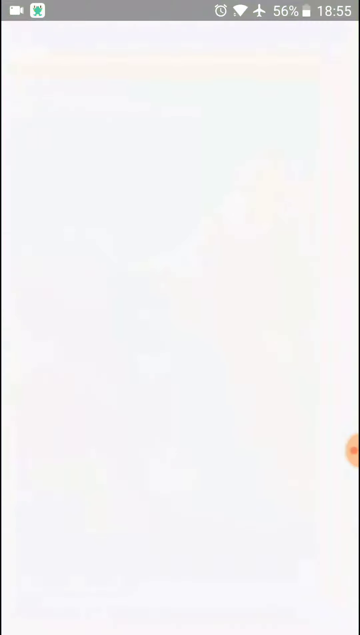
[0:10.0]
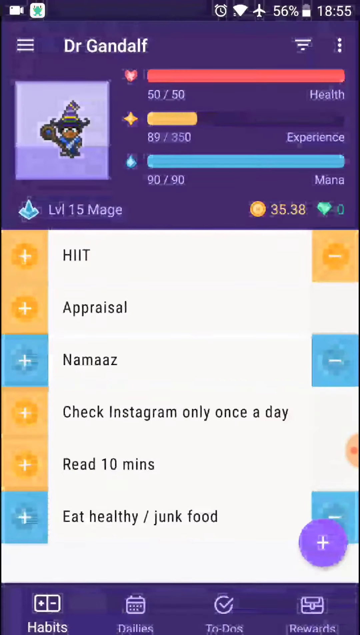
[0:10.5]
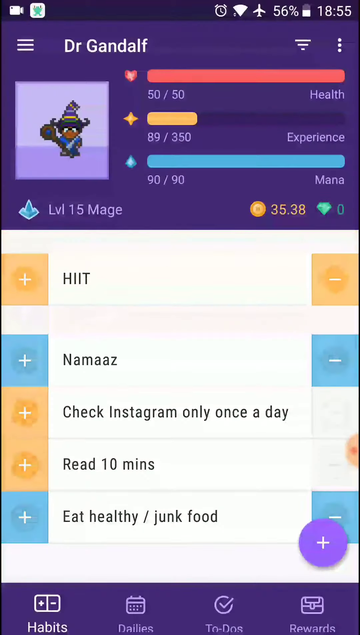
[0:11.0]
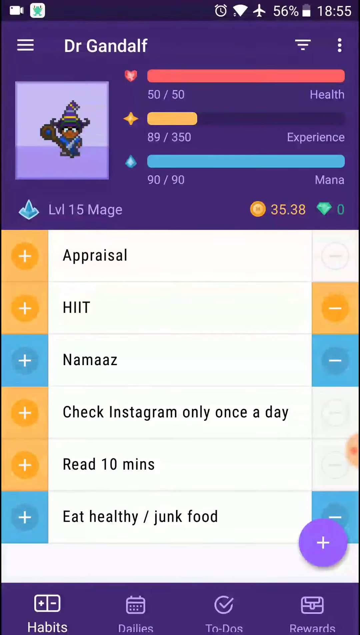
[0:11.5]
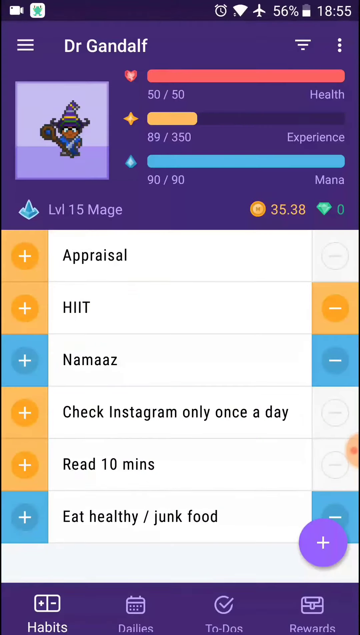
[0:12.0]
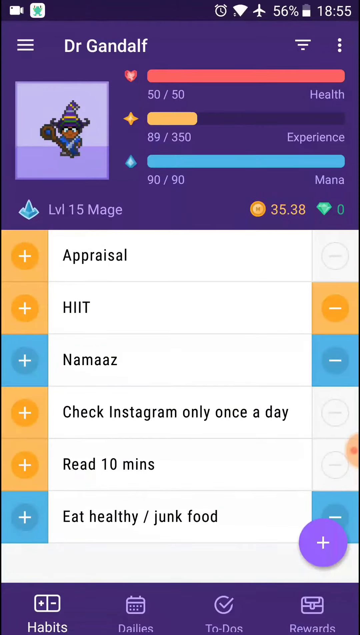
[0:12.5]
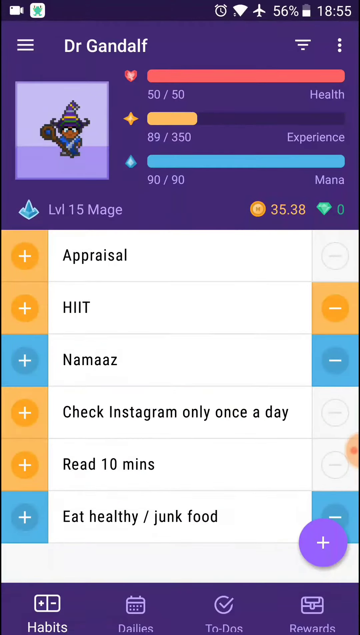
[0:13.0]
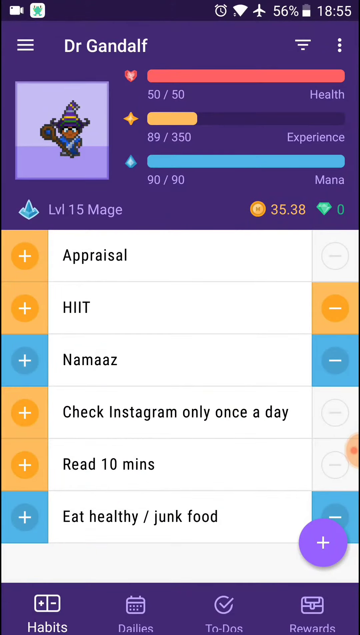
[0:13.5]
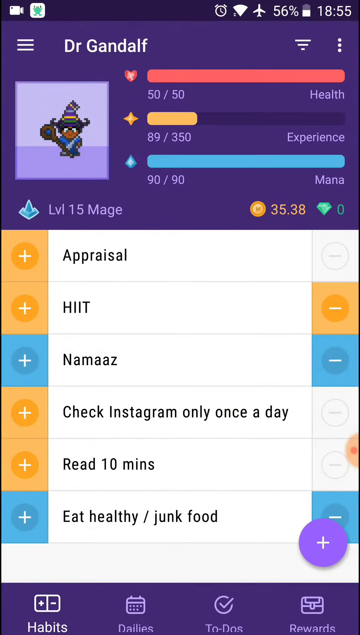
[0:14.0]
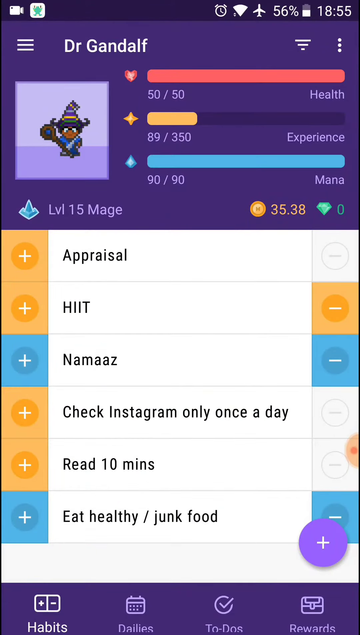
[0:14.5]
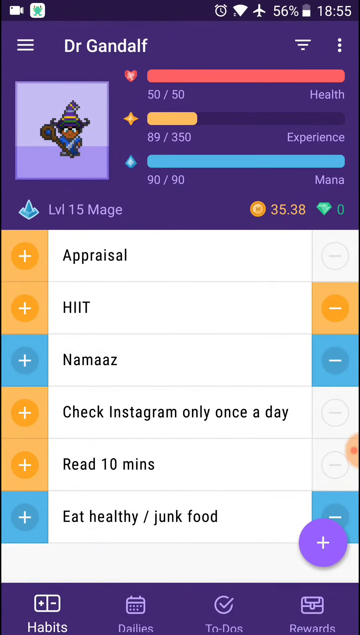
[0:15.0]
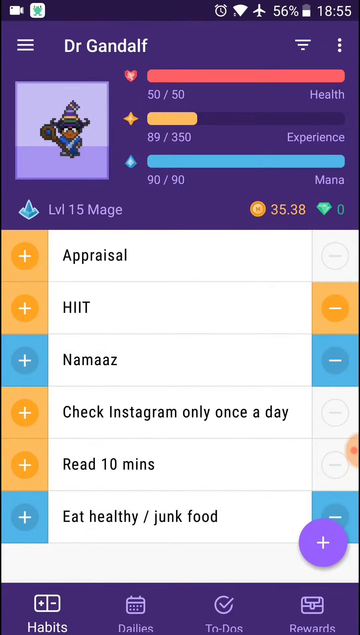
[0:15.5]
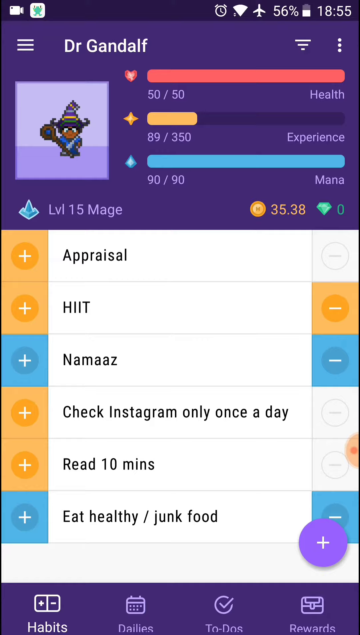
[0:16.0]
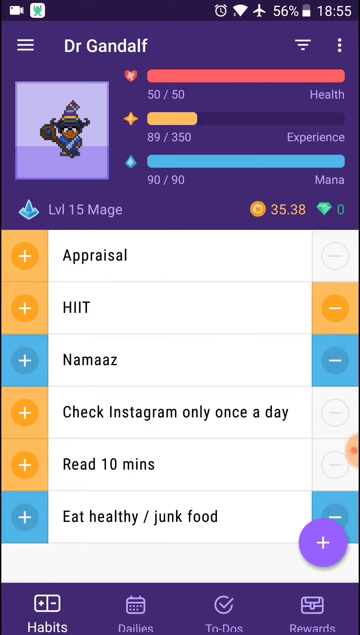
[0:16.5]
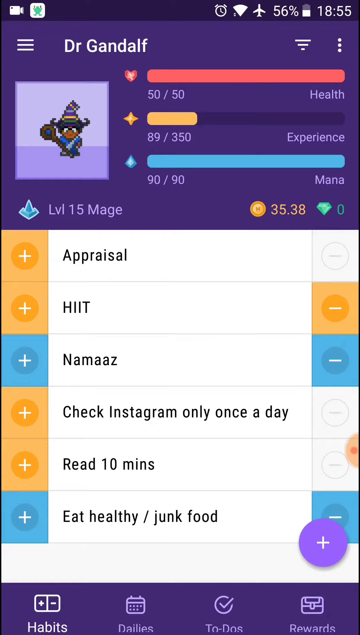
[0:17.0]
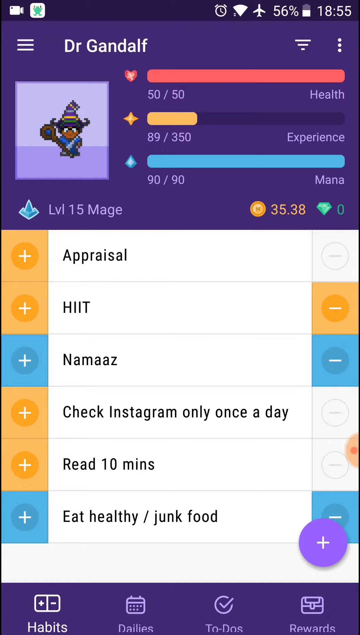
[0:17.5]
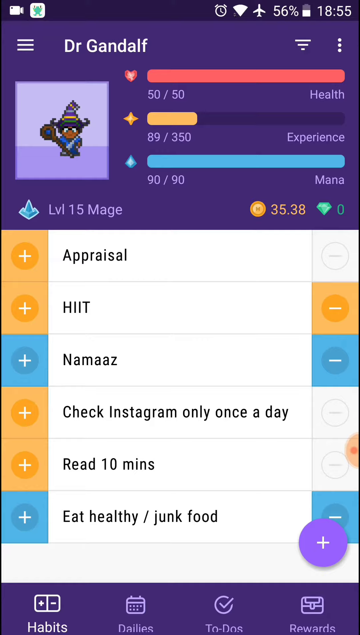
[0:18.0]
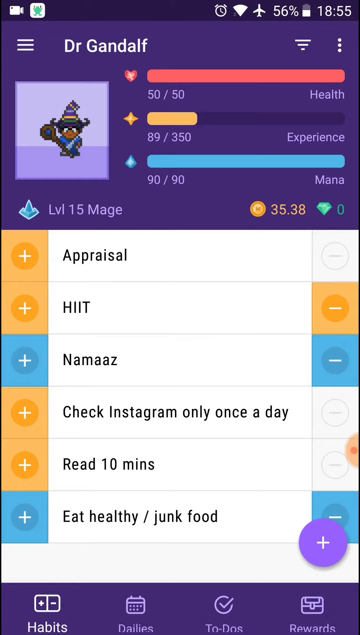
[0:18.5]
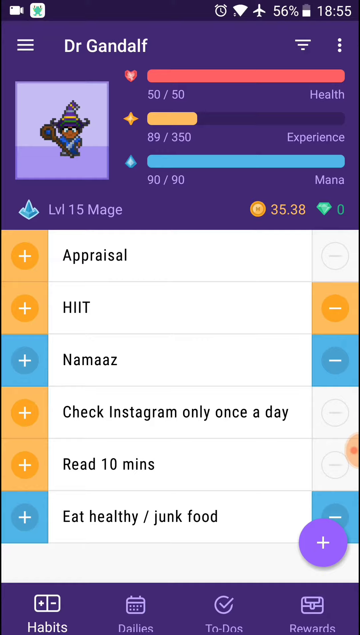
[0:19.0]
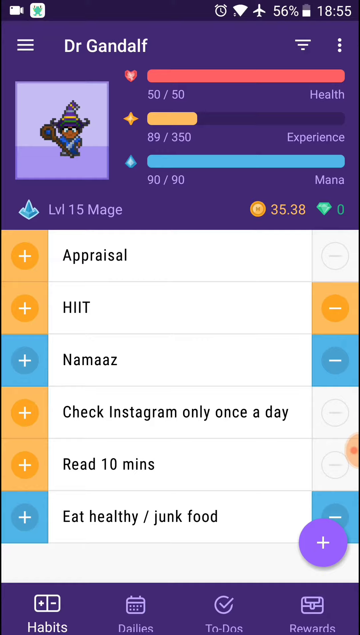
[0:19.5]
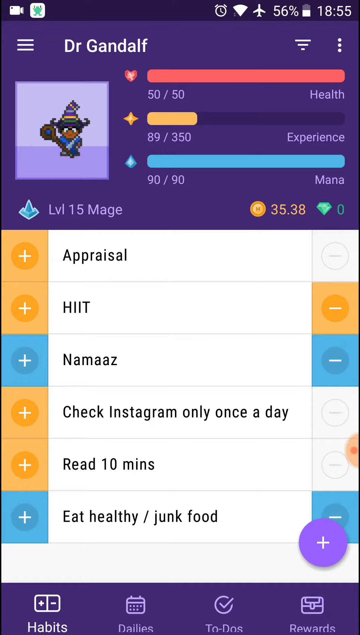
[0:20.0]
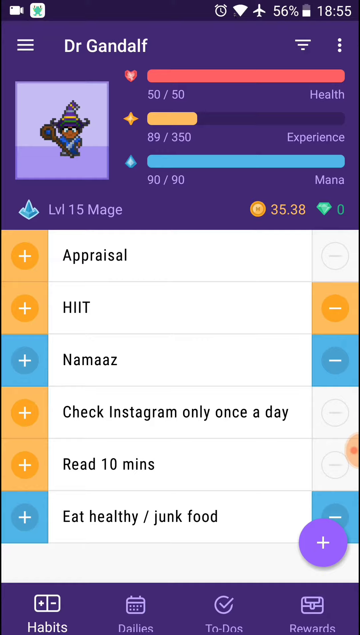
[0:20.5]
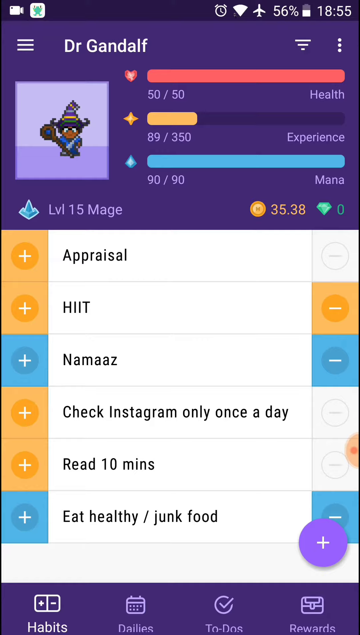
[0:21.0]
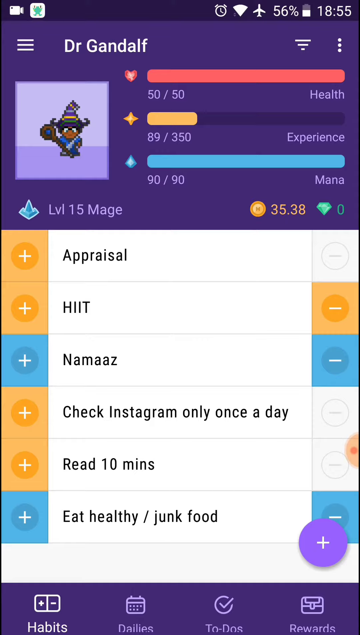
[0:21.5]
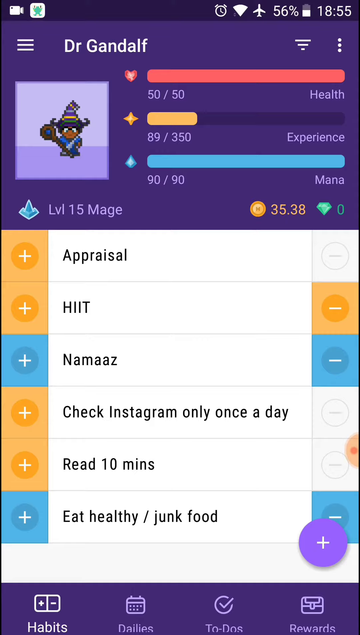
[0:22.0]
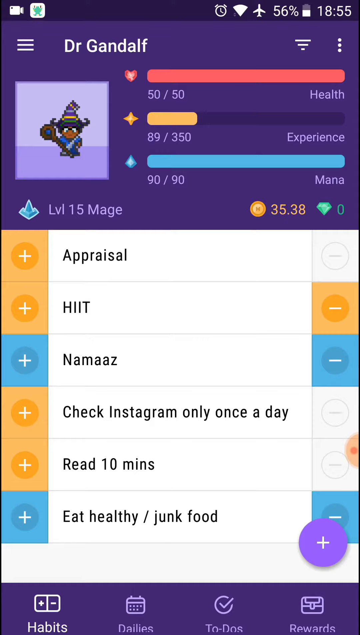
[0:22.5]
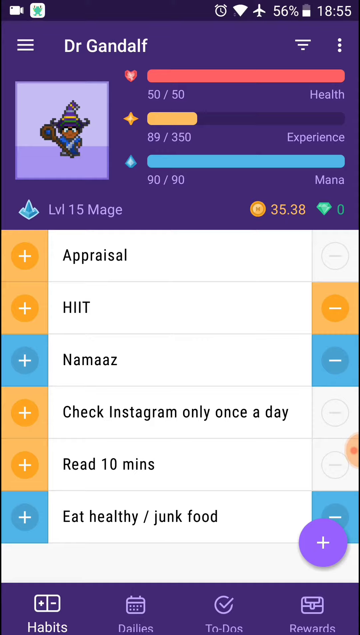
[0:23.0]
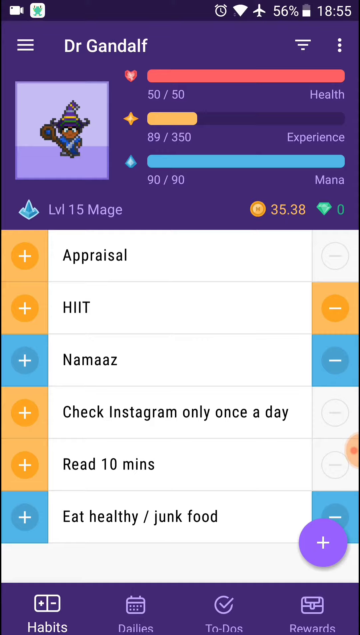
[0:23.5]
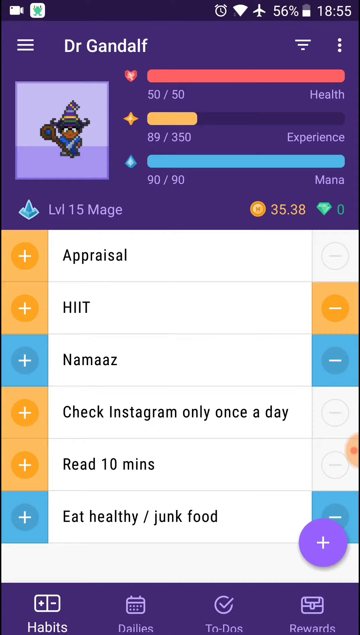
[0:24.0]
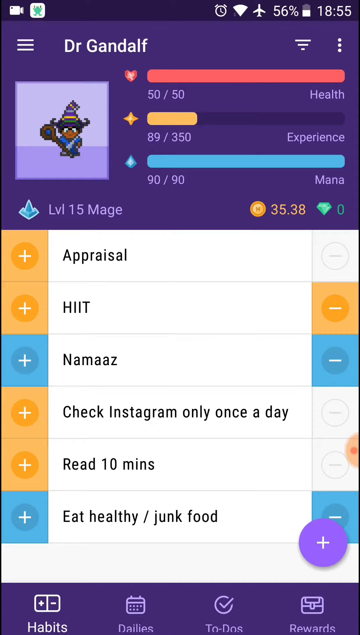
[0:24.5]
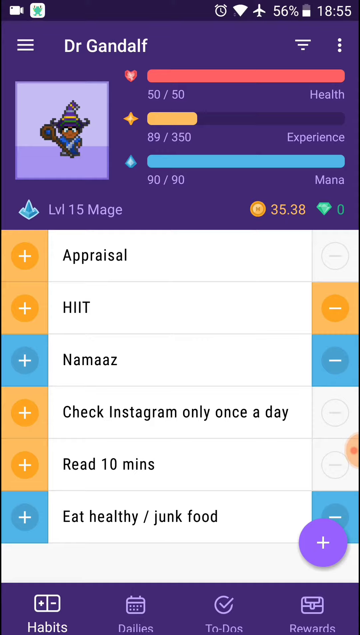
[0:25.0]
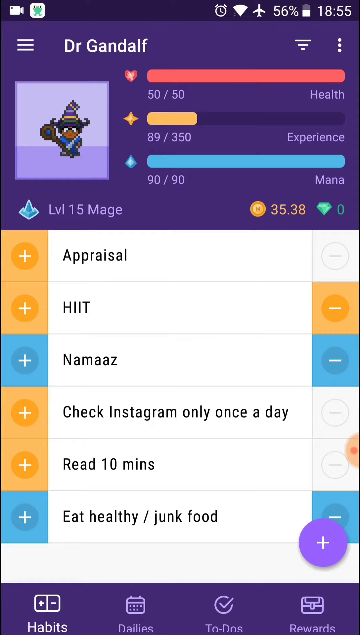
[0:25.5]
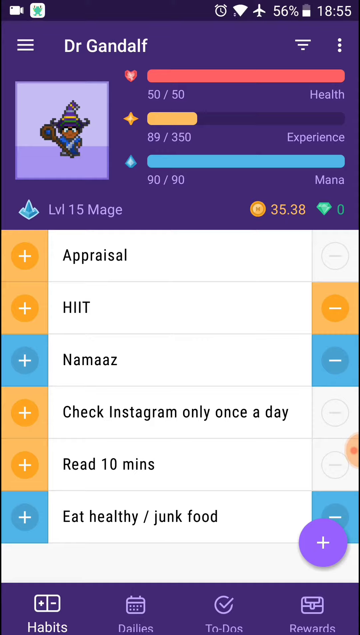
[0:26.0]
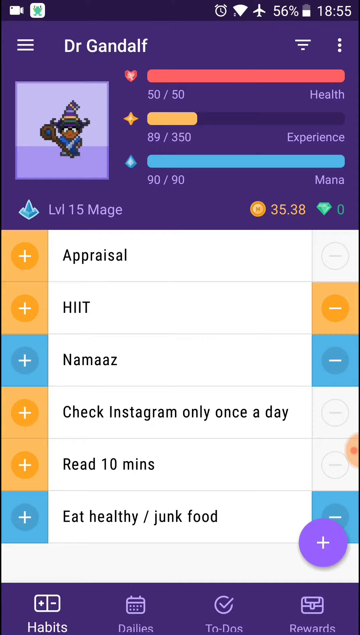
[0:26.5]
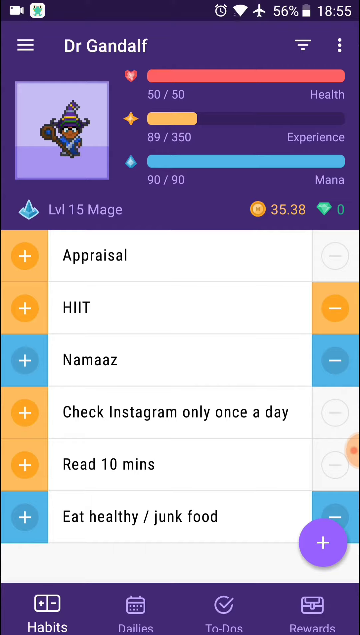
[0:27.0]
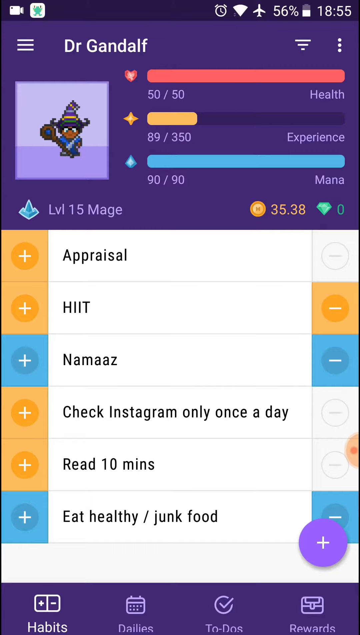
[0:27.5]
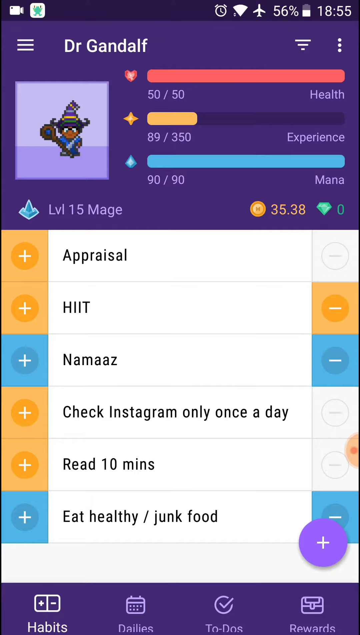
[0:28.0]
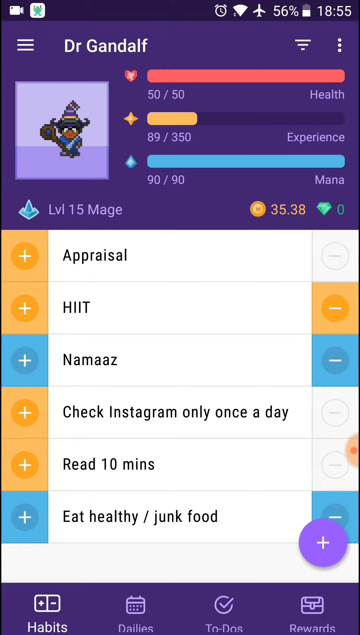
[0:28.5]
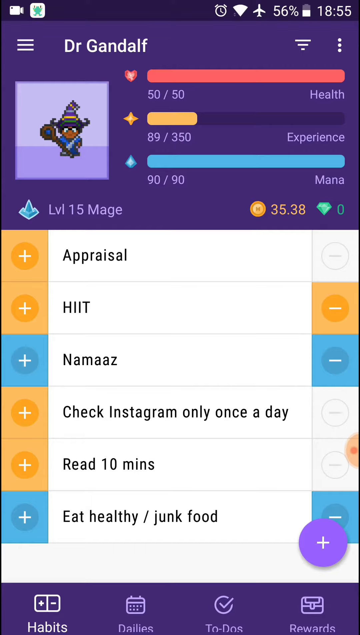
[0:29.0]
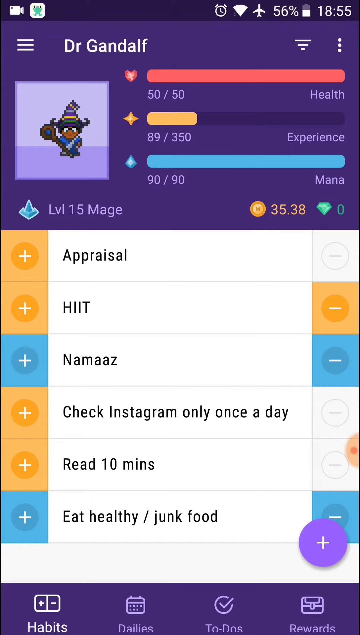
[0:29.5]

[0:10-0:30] A video game is opened on the phone's screen. It shows a character called Dr. Gandalf along with the character's stats: health, experience points and mana. Toward the bottom there appears to be some sort of list, and at the very bottom of the screen are four buttons to choose from, reading "Habits", "dailies", "to do's" and, in the bottom right corner, "rewards". Also in the bottom right corner is a purple button with a white plus sign in its middle. In the top left corner is the character, who looks like a wizard, holding a staff and wearing a wizard's hat. The character is a level 15 mage named Dr. Gandalf.